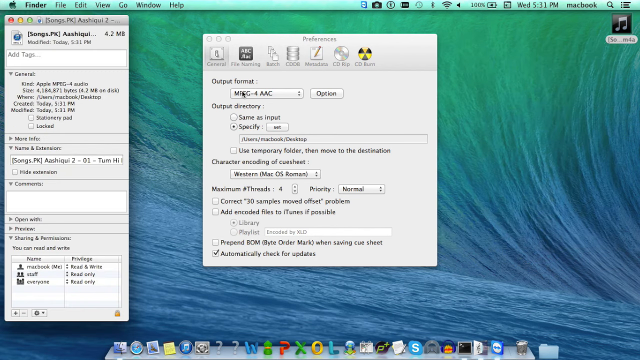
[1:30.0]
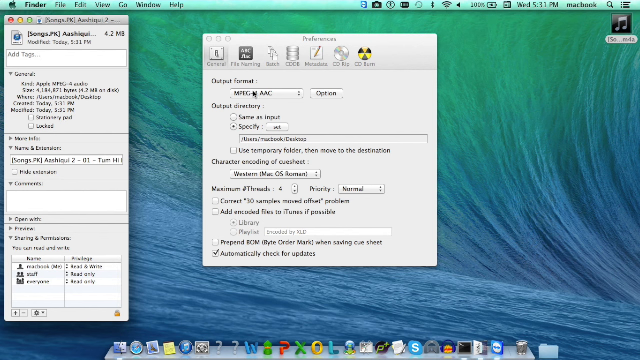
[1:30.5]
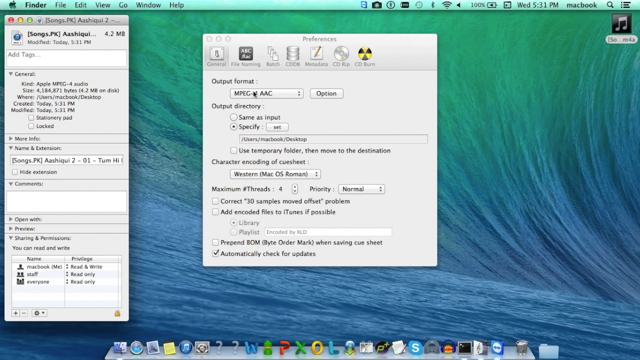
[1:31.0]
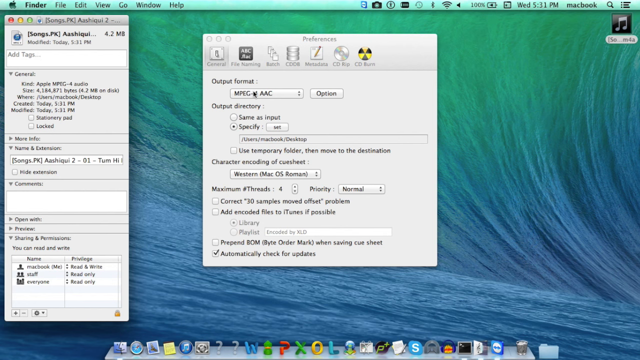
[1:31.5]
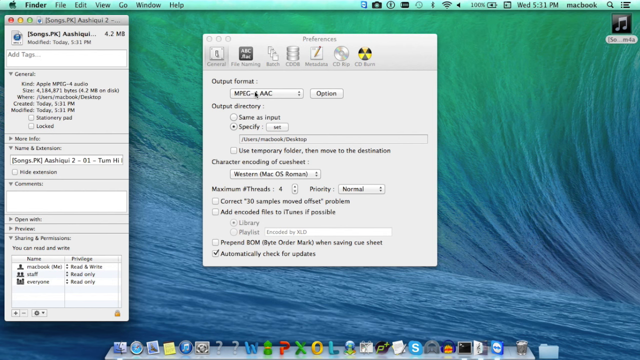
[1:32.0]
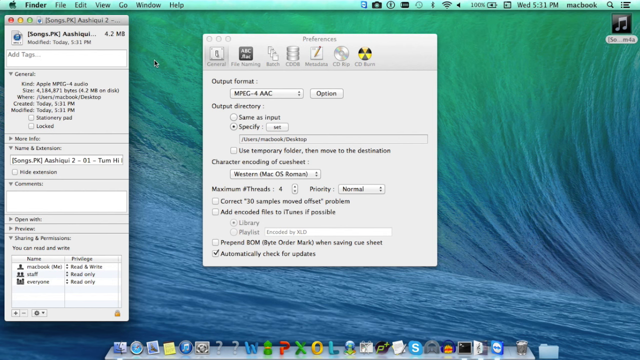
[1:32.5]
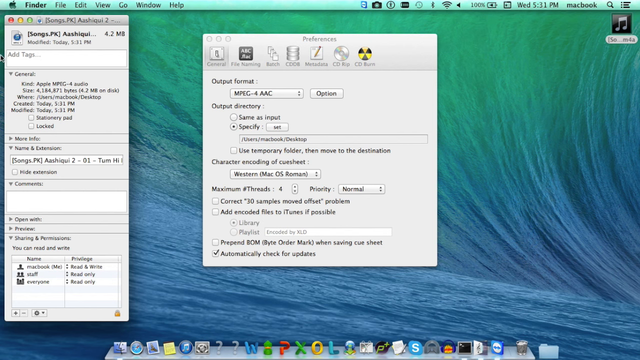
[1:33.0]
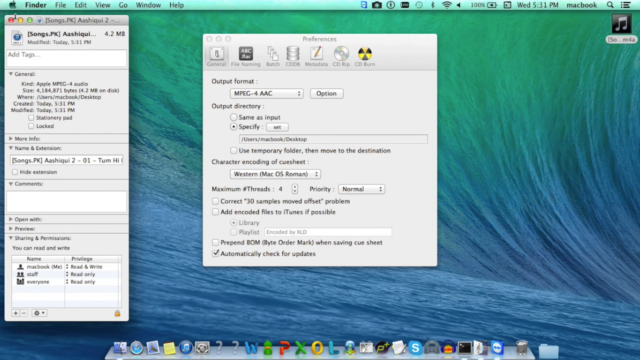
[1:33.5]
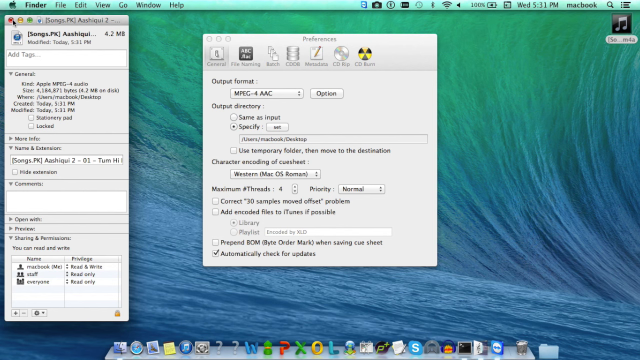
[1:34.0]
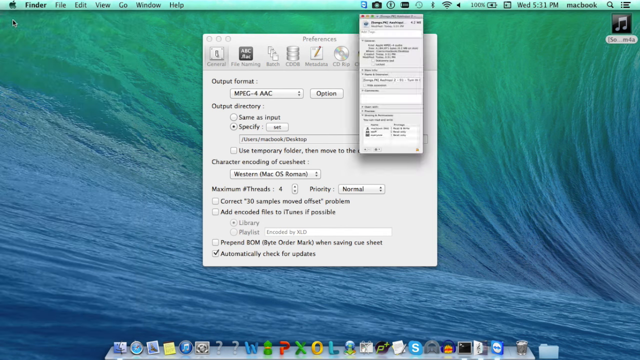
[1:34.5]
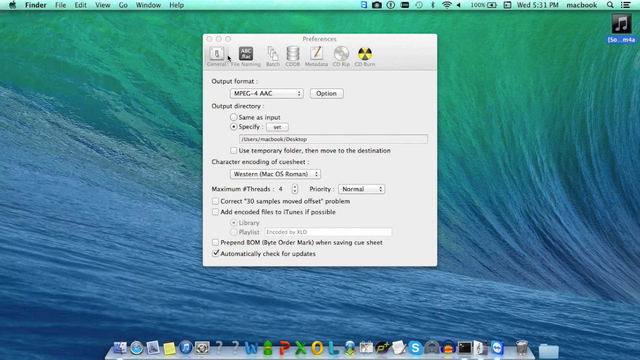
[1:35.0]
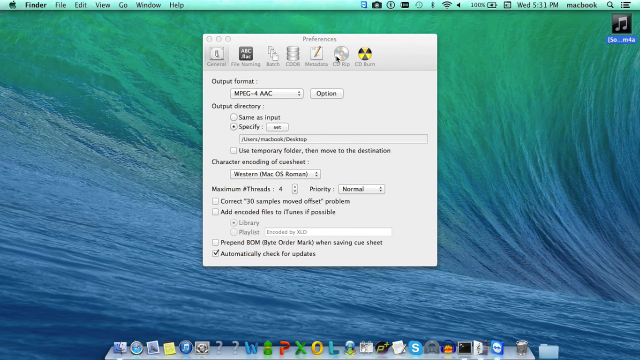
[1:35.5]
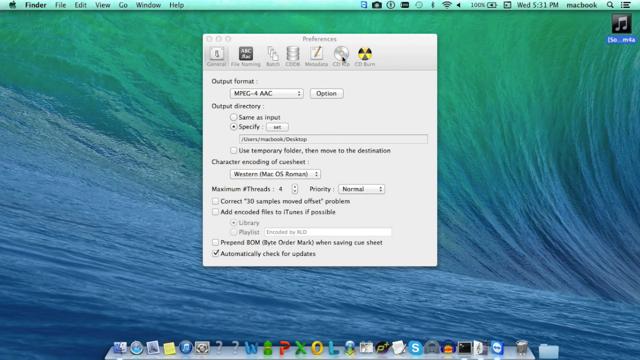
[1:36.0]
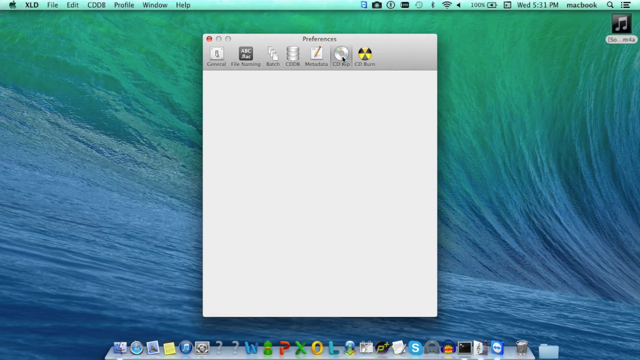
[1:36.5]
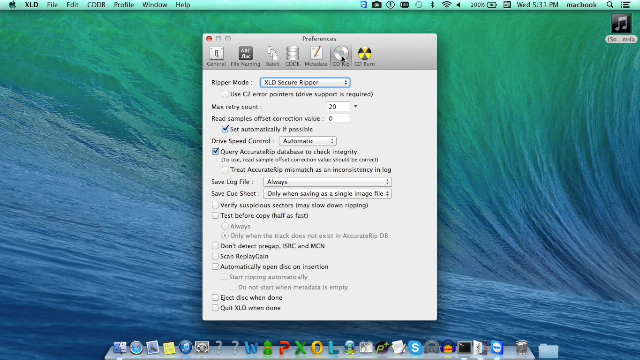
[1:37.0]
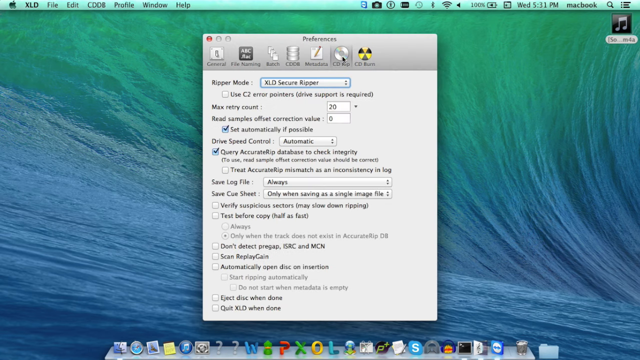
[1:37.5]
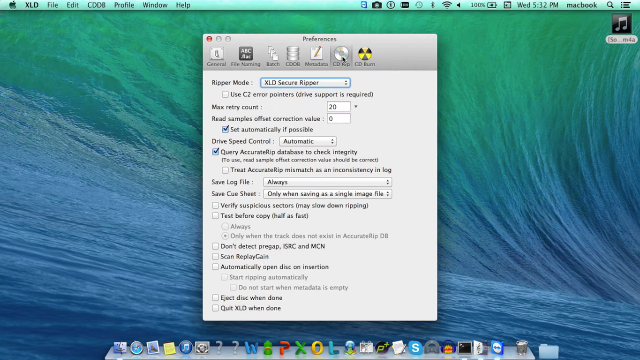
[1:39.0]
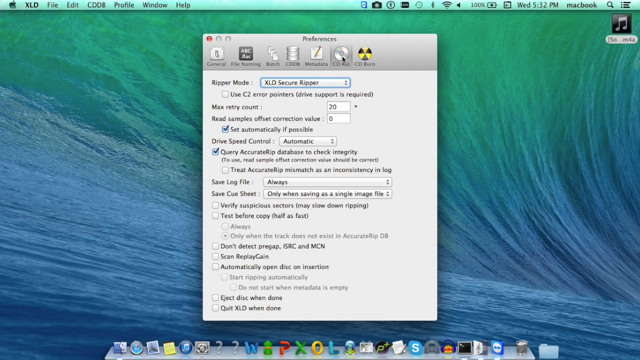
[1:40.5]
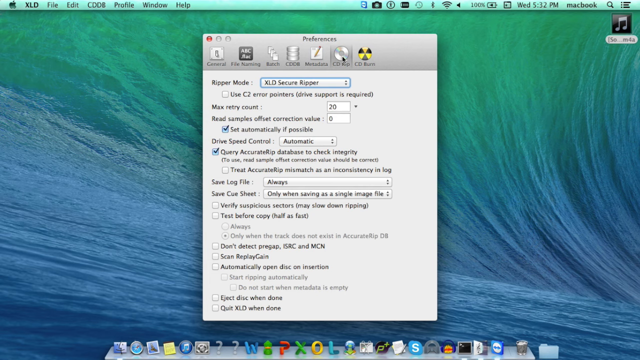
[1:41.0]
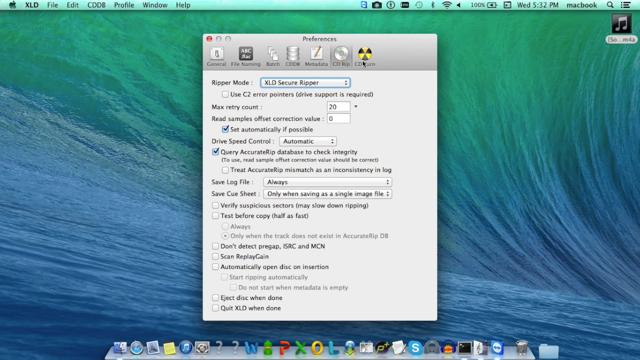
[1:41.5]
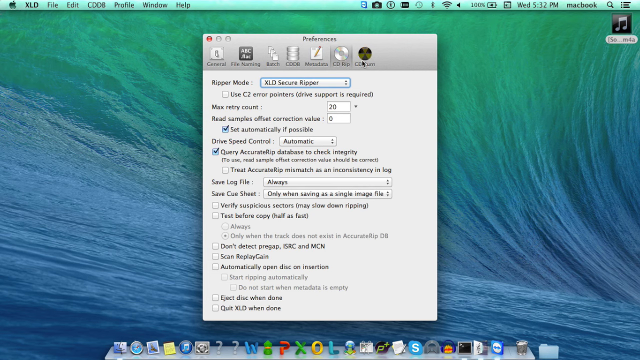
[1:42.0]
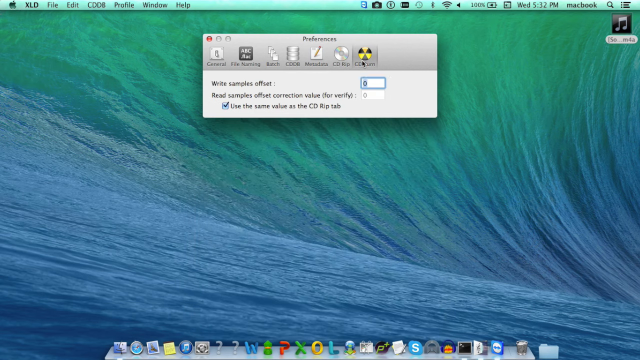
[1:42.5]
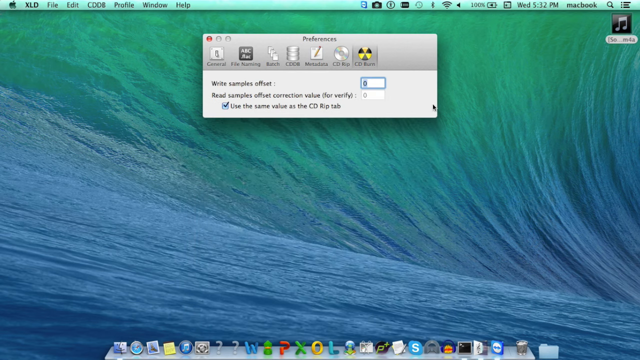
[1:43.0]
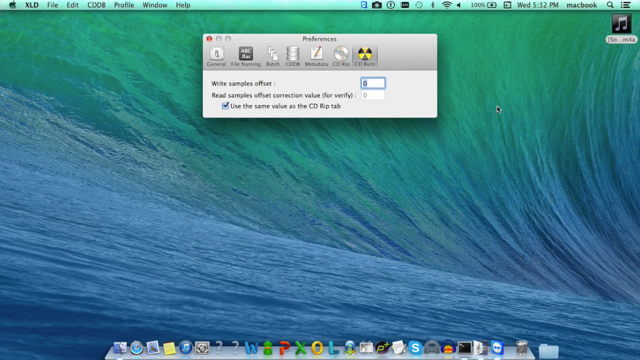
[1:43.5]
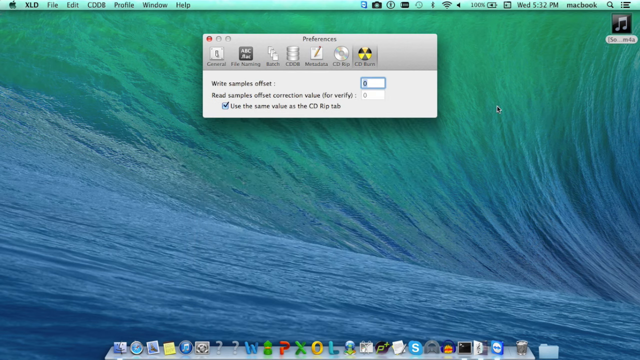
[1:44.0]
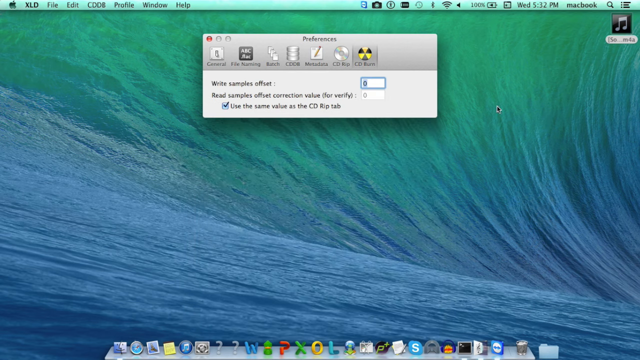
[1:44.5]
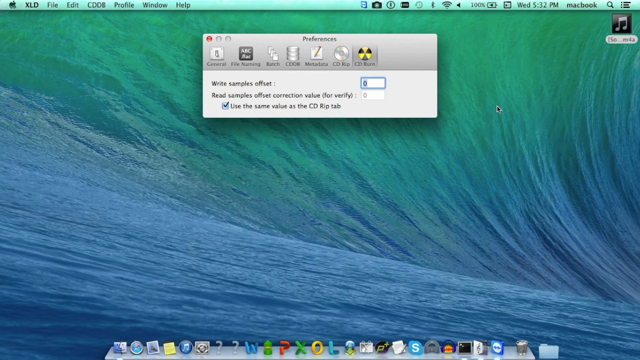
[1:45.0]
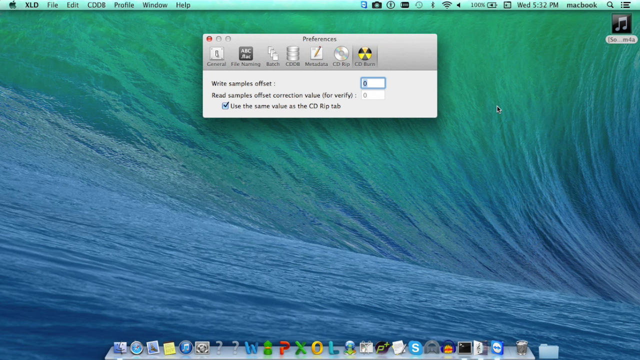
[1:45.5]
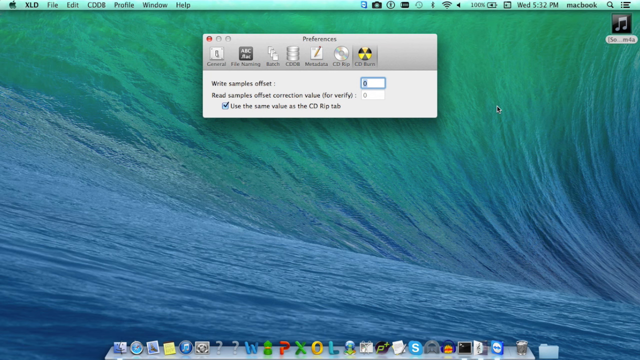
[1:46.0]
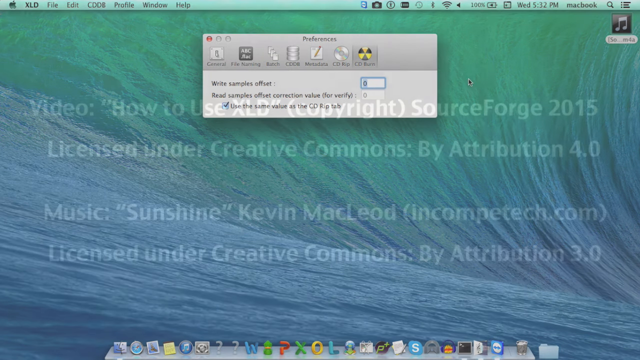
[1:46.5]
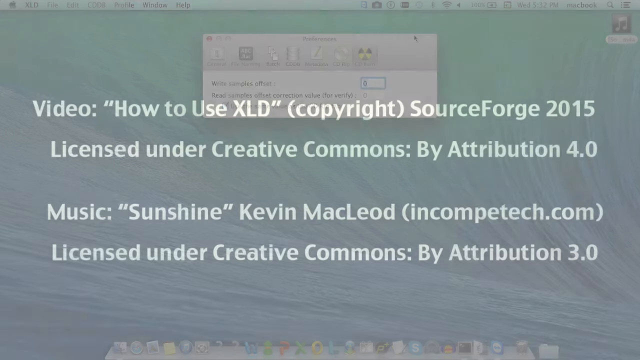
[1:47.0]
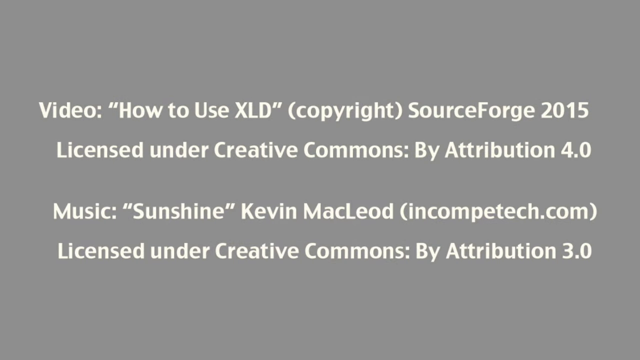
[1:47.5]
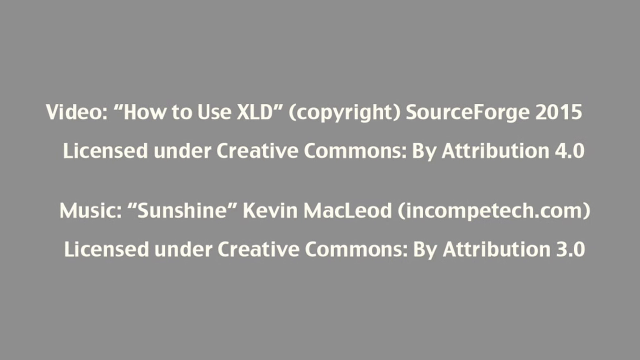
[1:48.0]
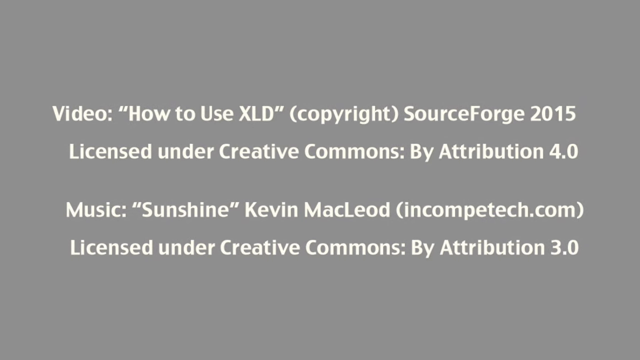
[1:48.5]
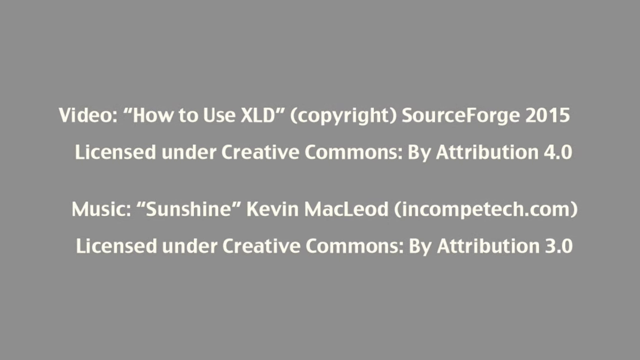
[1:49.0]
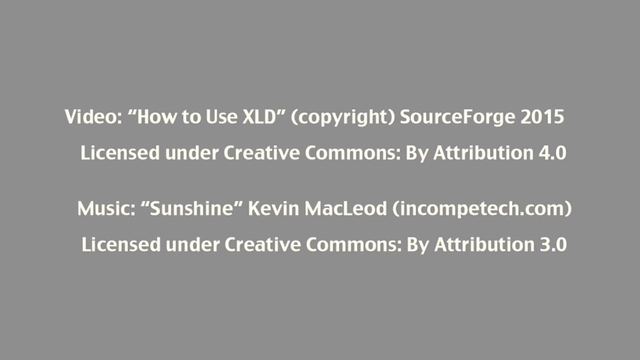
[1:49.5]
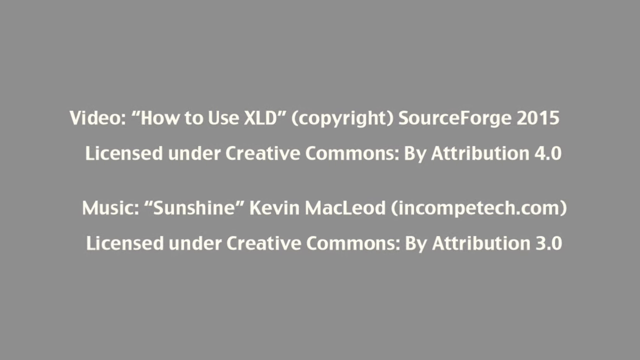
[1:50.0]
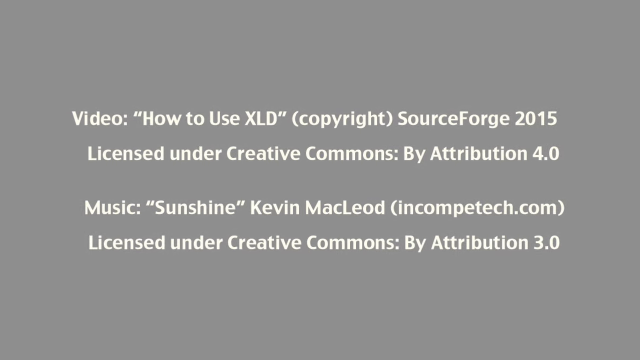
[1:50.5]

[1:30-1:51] On the MacBook screen, the Get Info window with the file's metadata is closed and minimized, and preferences are opened again. Some selections are made across a couple of different tabs, though it is quite difficult to see what is being done. The video then fades to a credits screen with a description of the video, how to use XLD, SourceForge 2015, some licensing information, music credits for "Sunshine" by Kevin MacLeod, and licensing credits underneath for both the video and the music.